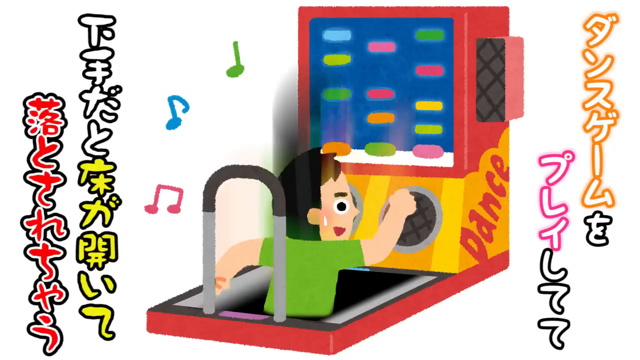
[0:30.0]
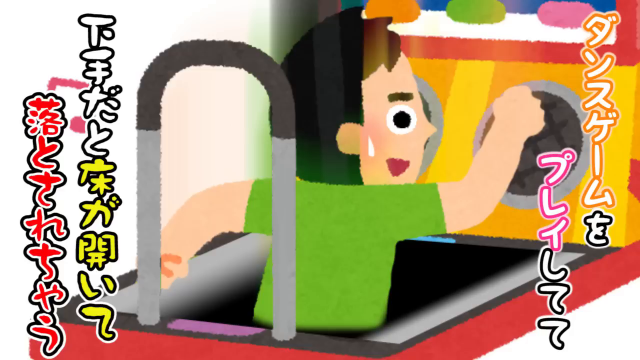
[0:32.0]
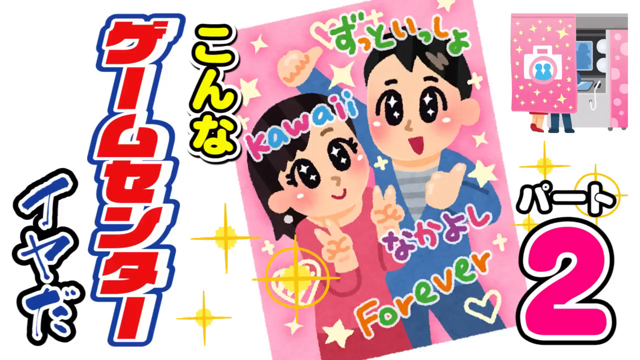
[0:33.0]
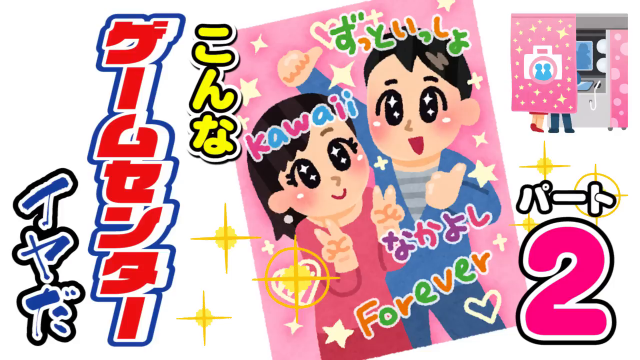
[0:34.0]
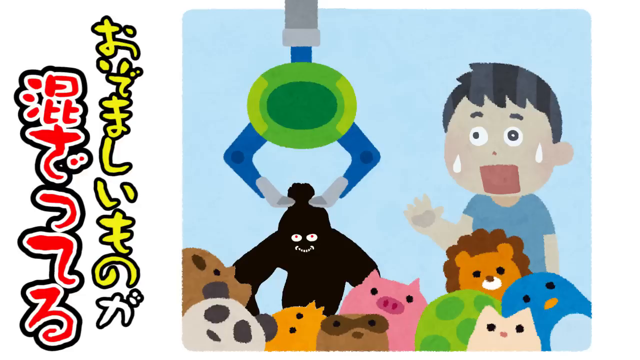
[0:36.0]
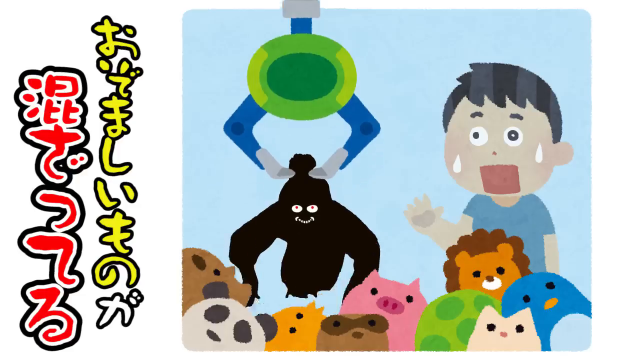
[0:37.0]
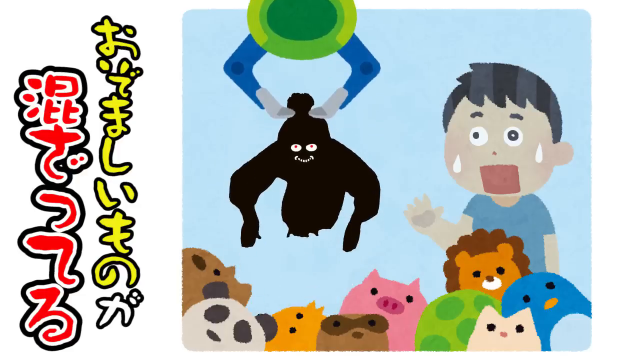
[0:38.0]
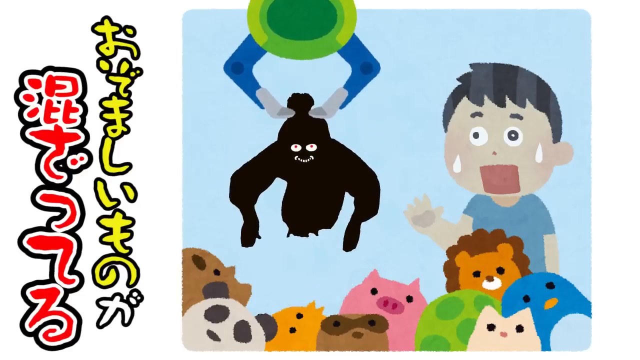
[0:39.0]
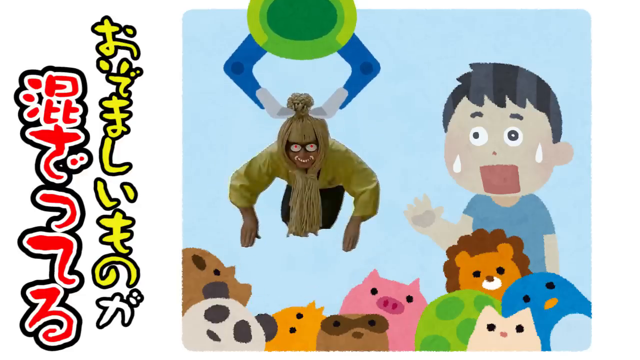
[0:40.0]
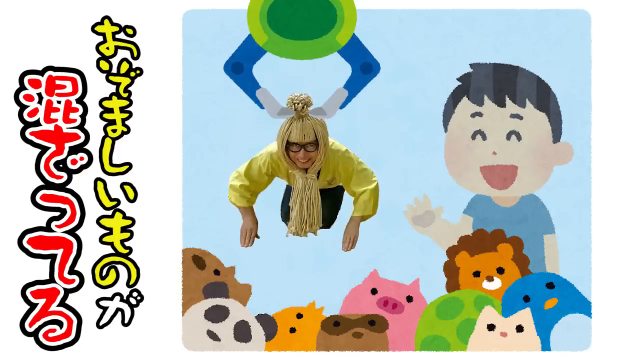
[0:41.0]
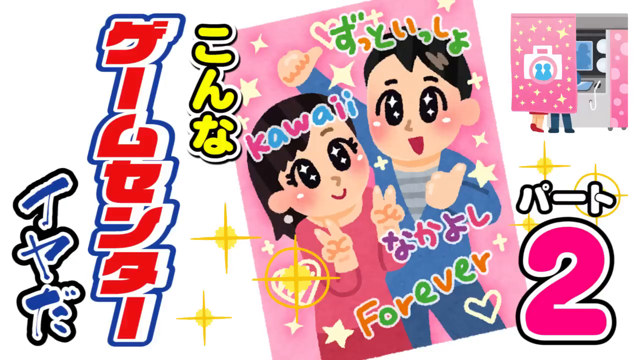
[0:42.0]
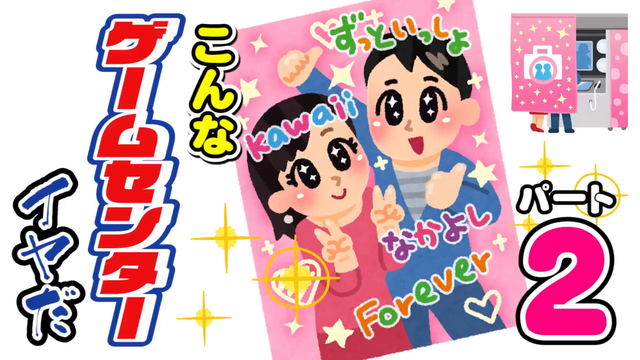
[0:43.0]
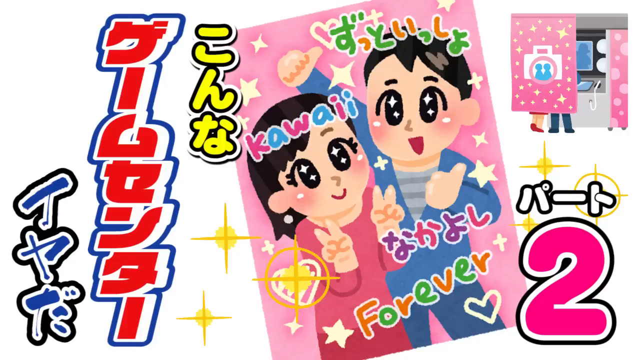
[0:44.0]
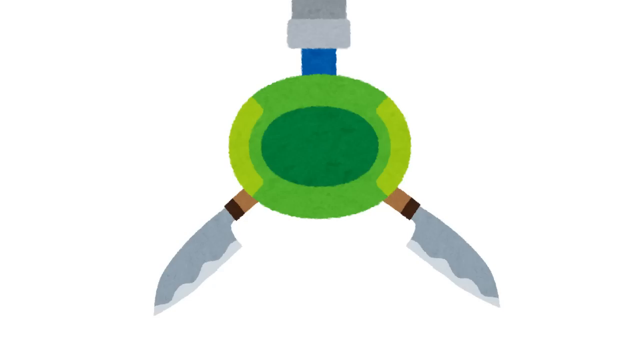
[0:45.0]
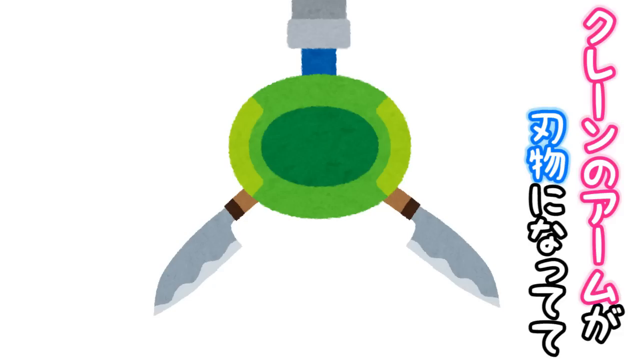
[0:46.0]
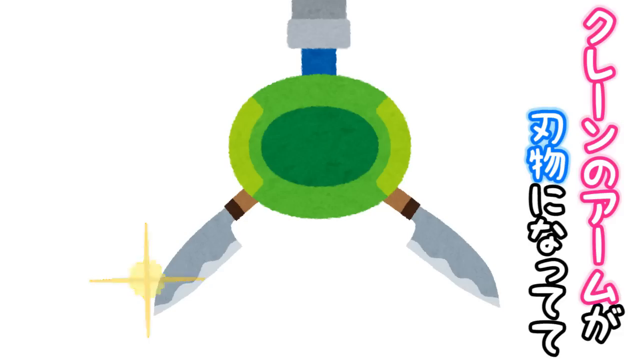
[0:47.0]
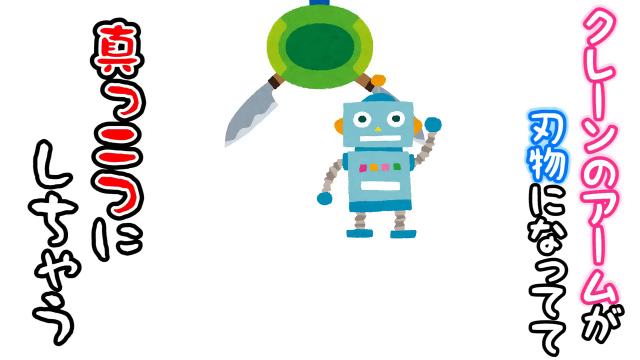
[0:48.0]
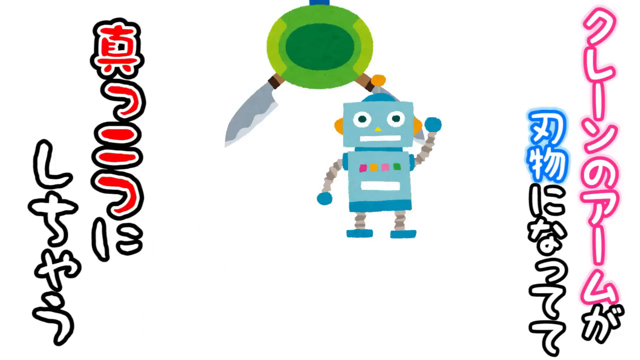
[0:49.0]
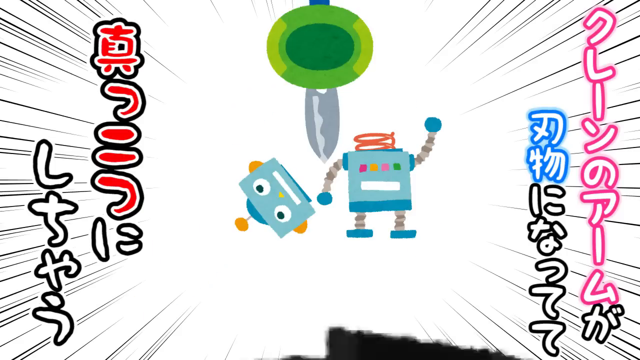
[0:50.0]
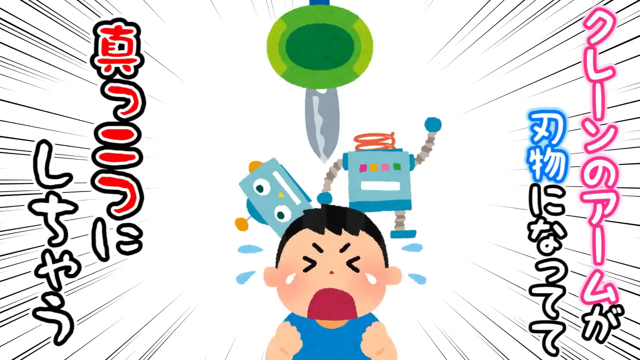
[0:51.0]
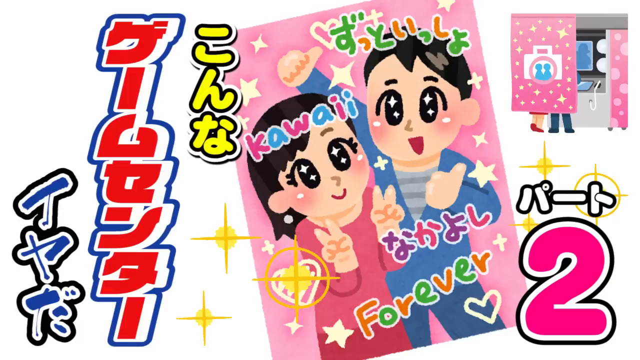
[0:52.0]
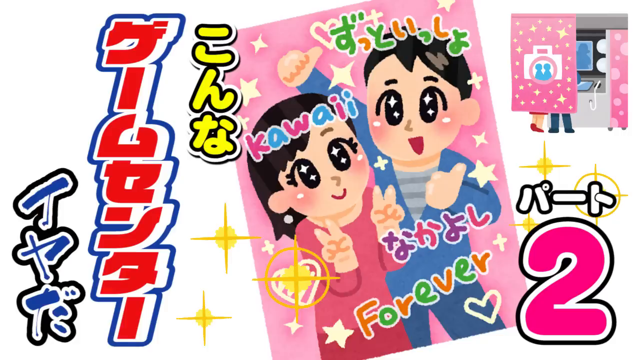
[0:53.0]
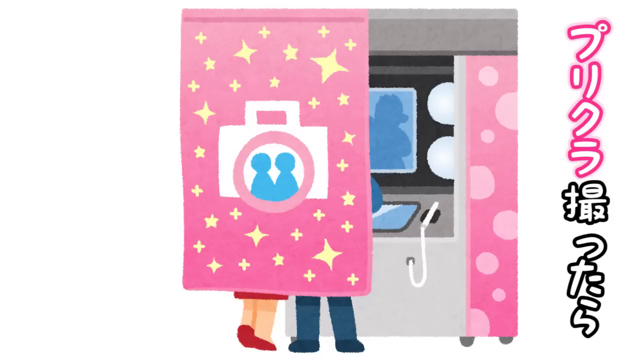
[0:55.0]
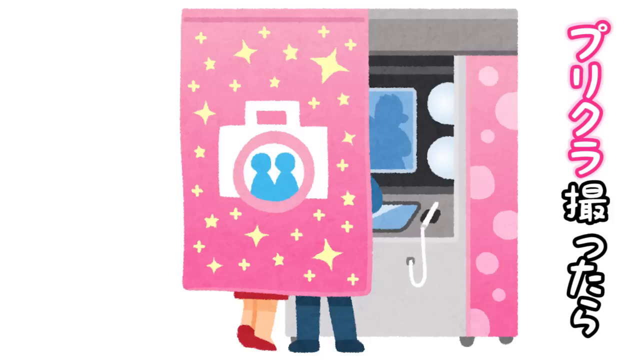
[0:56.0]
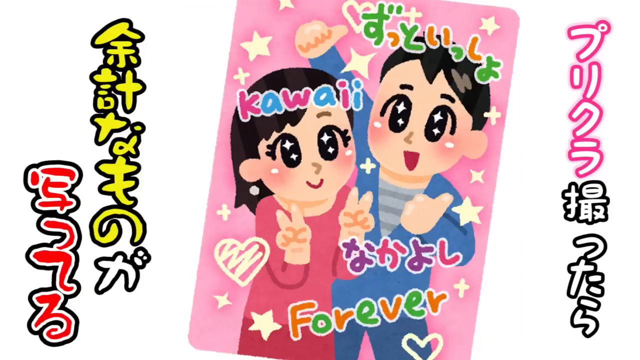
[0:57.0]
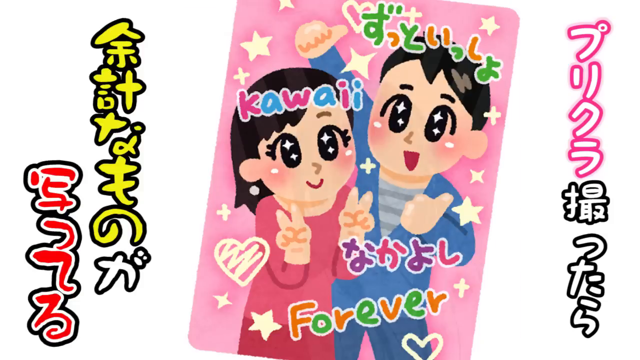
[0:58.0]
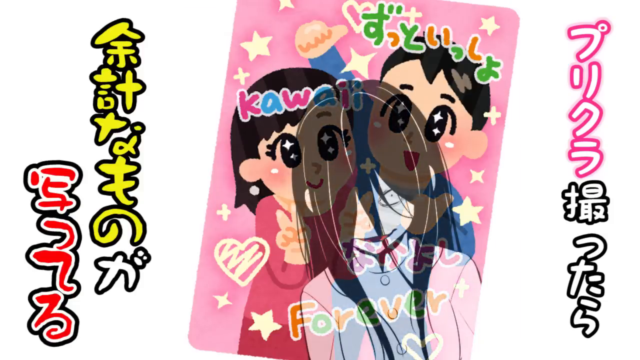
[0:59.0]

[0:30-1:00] The man looks stressed, appearing to have fallen through the Dance Dance Revolution game up to his waist. The video returns to the pink poster with the big two on the right. A photo shows what looks like the same man, this time in a blue shirt, with a big open mouth and two stress dots on his face. He stares at a crane game whose blue and green crane hand is grabbing a black monster of some sort. Various arcade prizes are visible, including a stuffed pig, a penguin, a lion and a panda bear. The pink poster with the two of them is shown again. Next comes the crane, whose pincer possibly looks like a chef's knife. A small, very square robot toy with a blue steel-looking square body and colorful buttons waves one hand. The crane snaps together and snaps off its head, which ends up on the left-hand side, cut off at a red spring. The man appears stressed out, his eyes kind of pointed inward, with tears and sweat bullets coming off him and Japanese text on either side. The poster of the man and woman on the pink background appears, and then the view zooms in on the photo booth, which has a pink curtain with a suitcase showing two little figures. The same pink poster with the two of them returns, followed by a drawing of a woman with long hair and what looks like a white shirt, looking kind of insane.